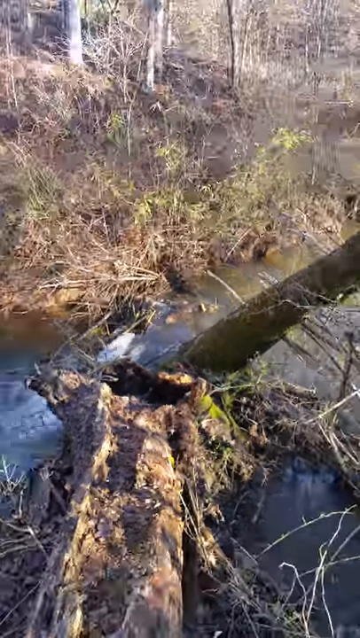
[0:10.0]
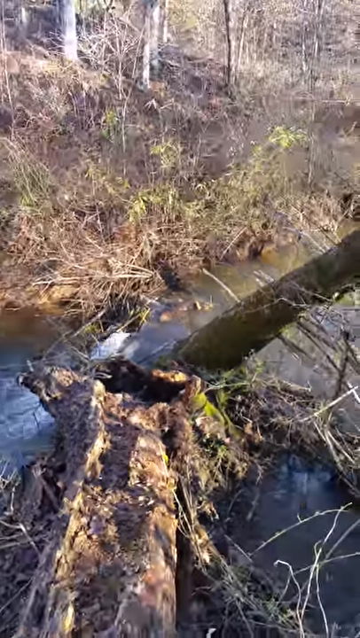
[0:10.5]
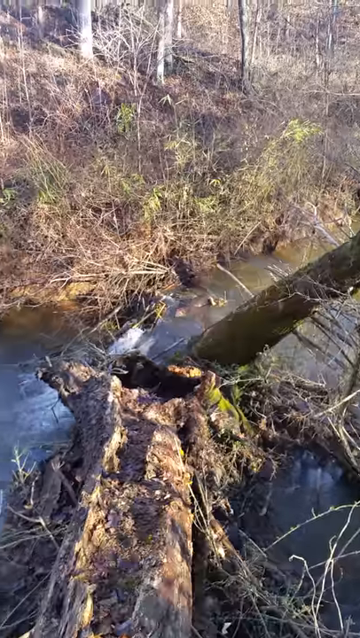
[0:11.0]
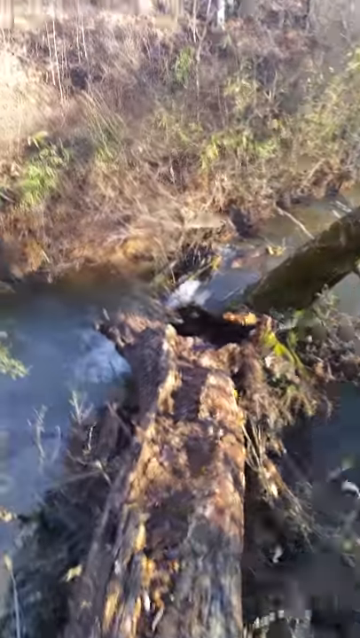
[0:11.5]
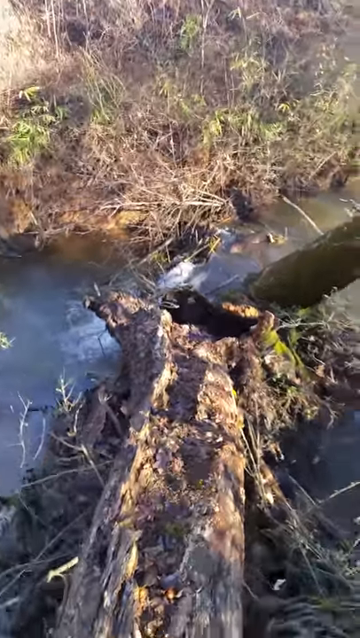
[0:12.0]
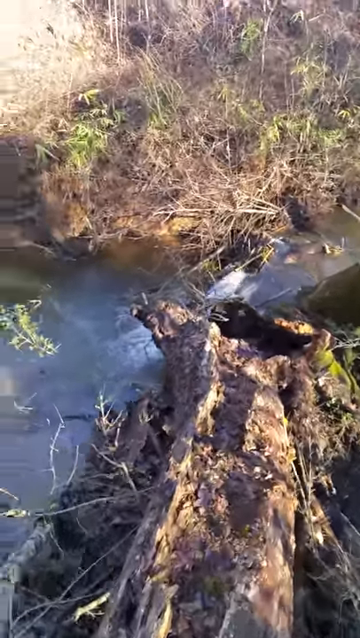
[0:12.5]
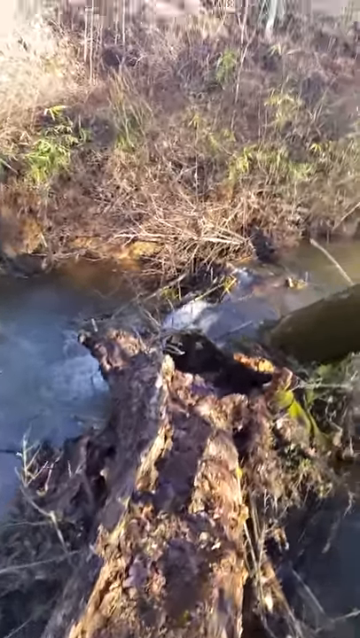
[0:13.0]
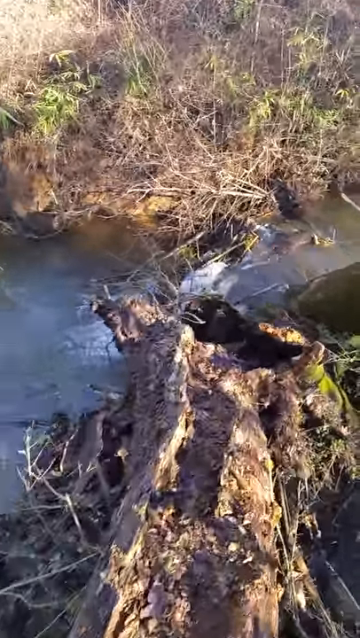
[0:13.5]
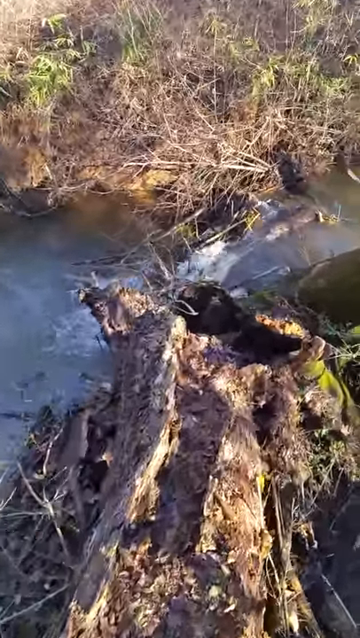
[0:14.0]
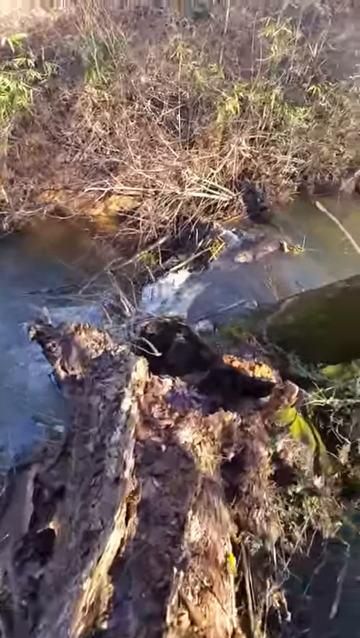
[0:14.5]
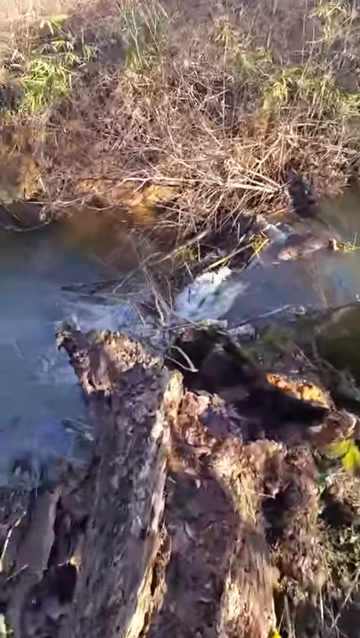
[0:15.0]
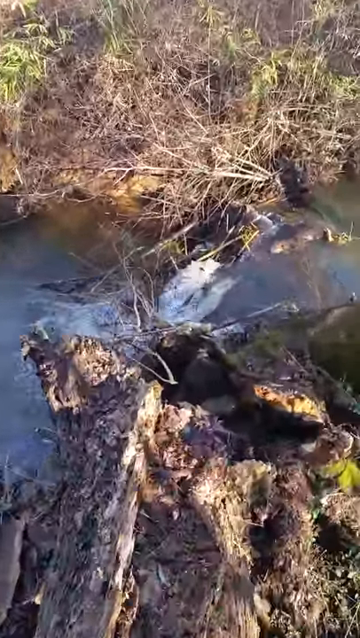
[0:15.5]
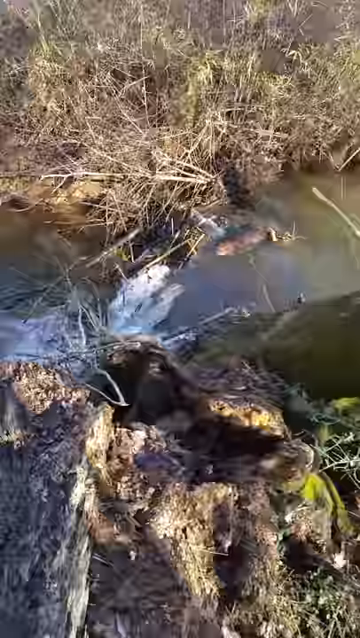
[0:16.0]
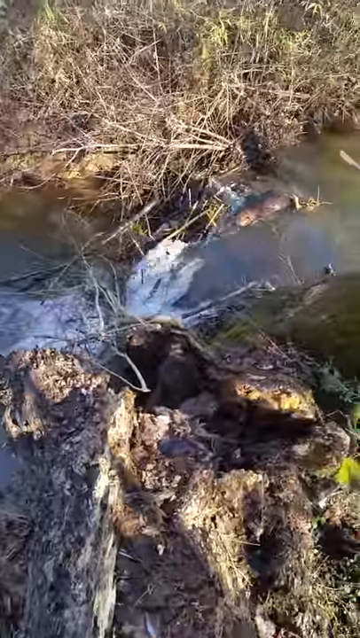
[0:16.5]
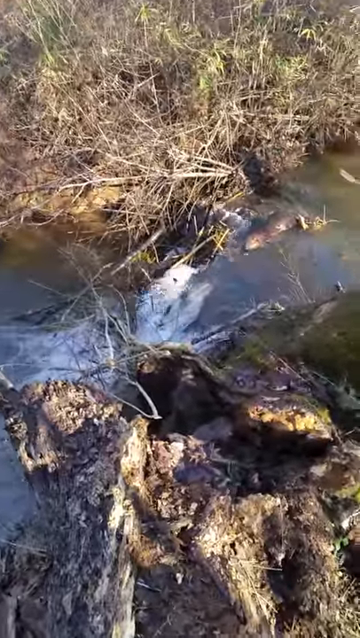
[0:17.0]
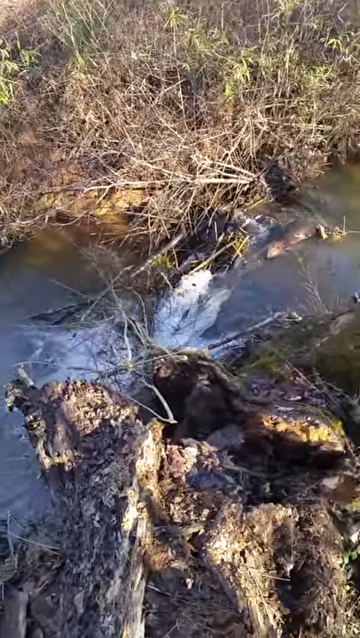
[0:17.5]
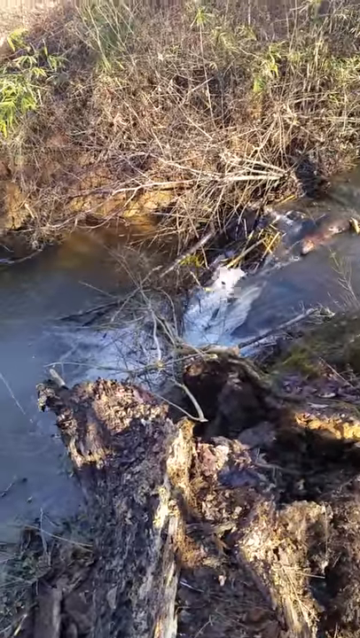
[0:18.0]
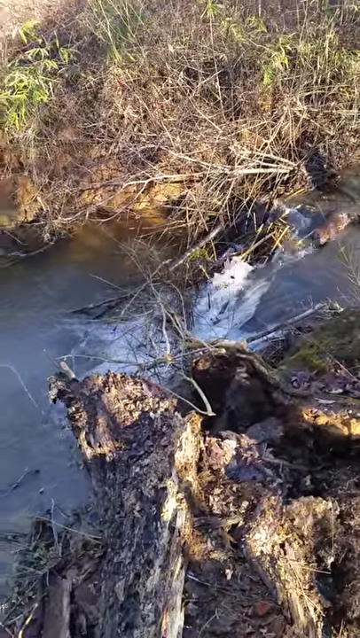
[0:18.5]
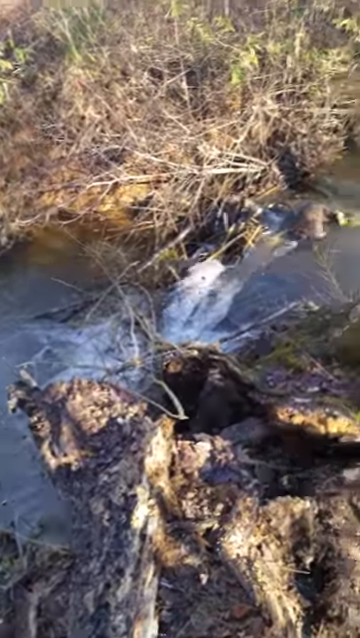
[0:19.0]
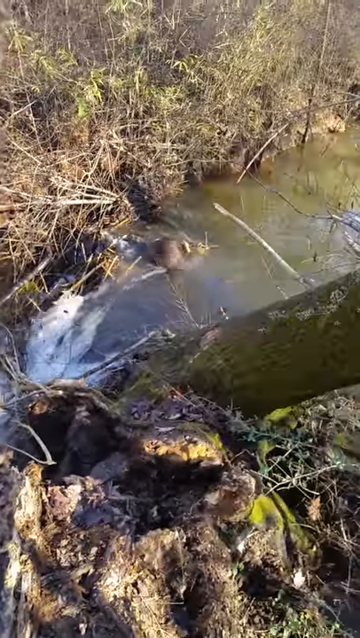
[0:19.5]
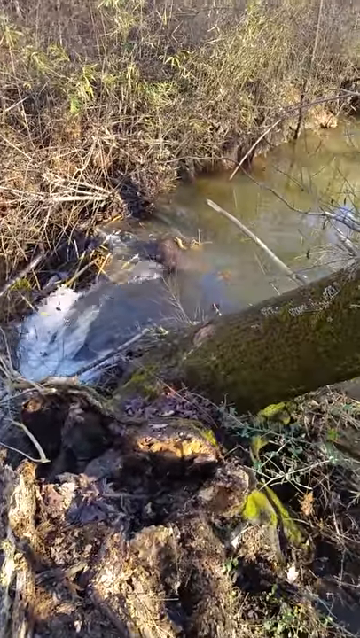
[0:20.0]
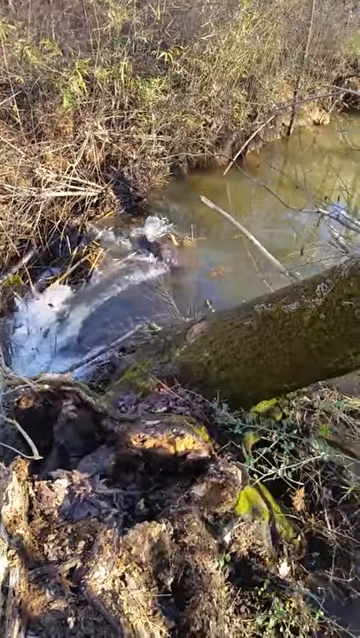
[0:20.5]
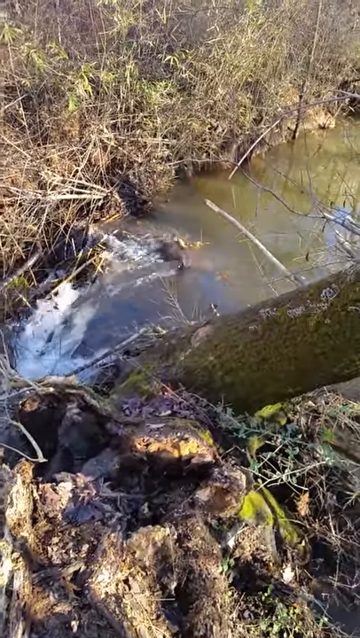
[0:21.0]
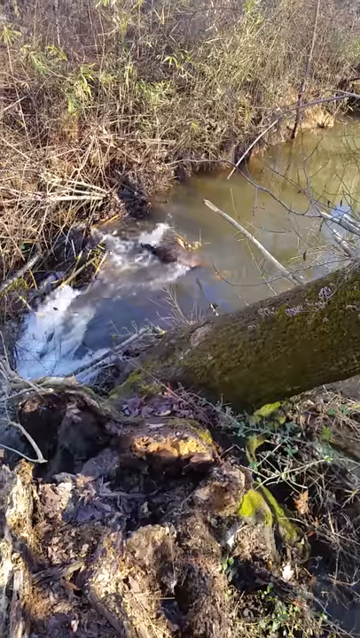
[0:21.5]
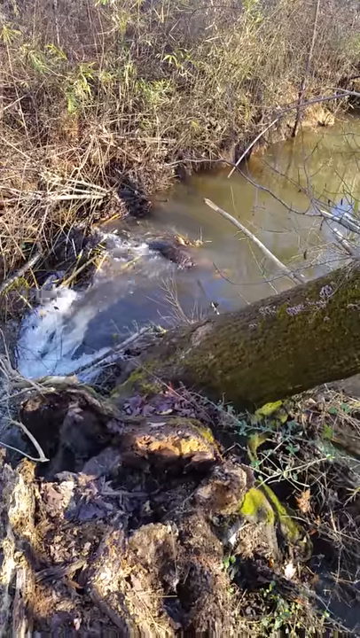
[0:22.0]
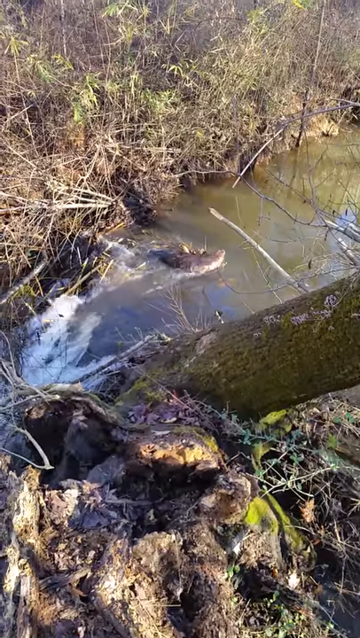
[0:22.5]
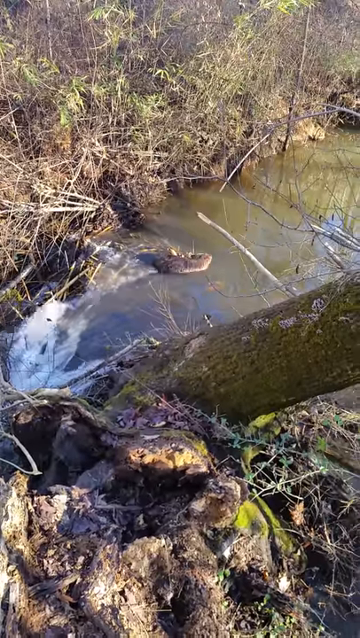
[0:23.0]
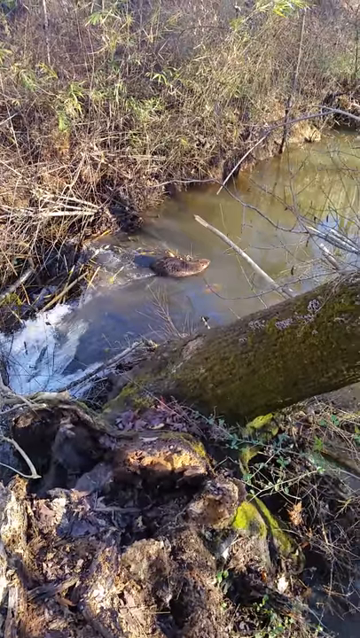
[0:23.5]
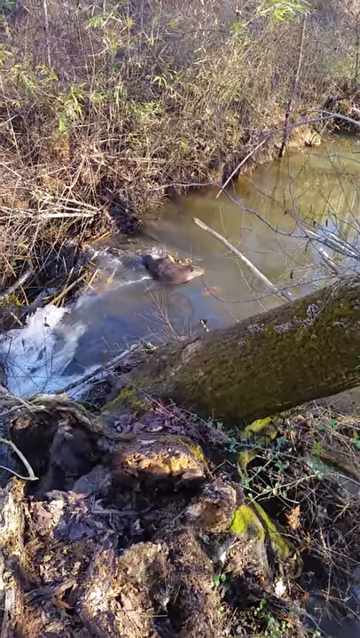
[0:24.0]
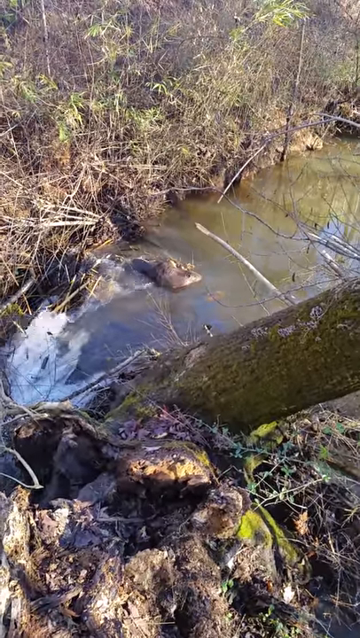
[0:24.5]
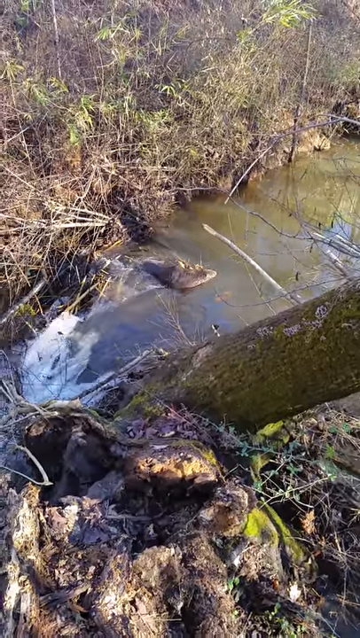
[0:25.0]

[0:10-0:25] The stream continues to be shown, with the beaver at the top section of the stream, possibly making or trying to make a dam. The beaver splashes around and moves its tail. A person then gets a bit closer, walking along a long log and moving toward the water, and the camera zooms in on the beaver moving around and making some activity in the water or pond area. The beaver is the only subject visible in this nature-like environment, and no people are depicted.